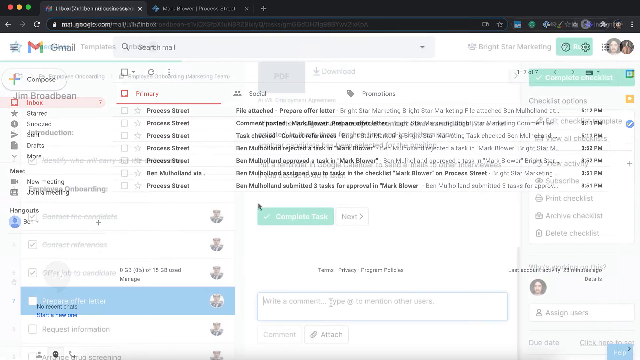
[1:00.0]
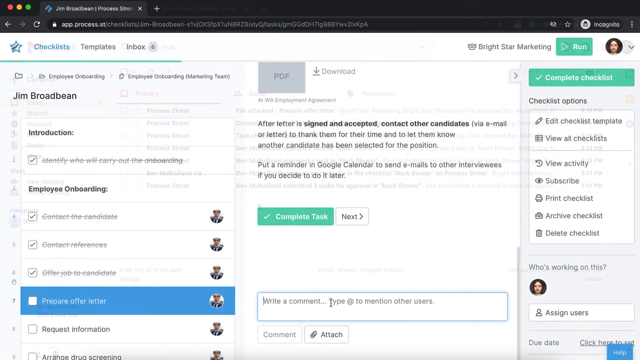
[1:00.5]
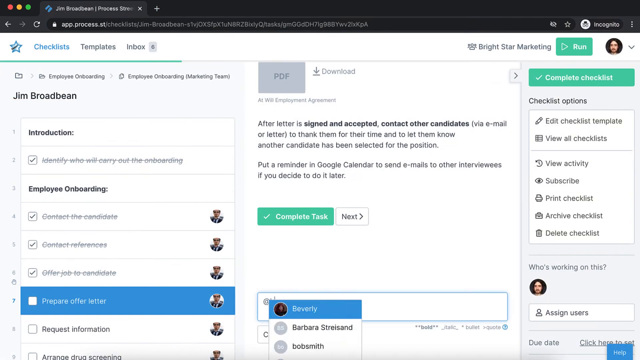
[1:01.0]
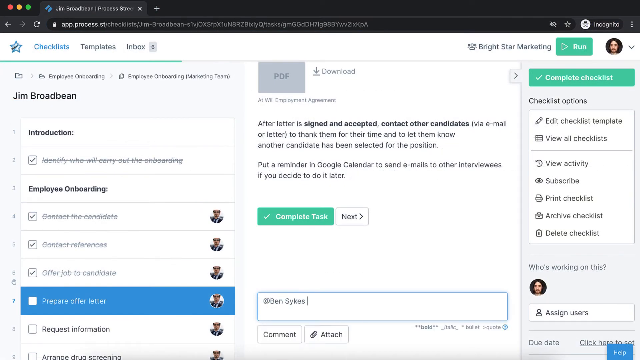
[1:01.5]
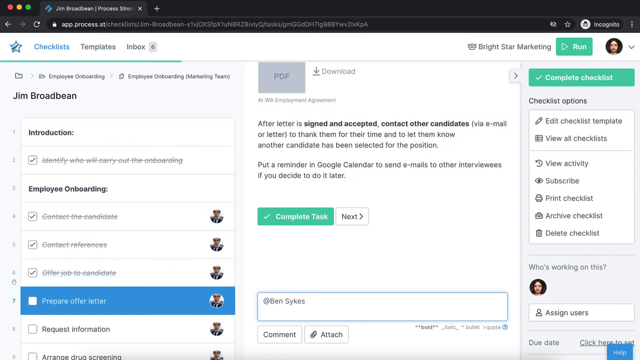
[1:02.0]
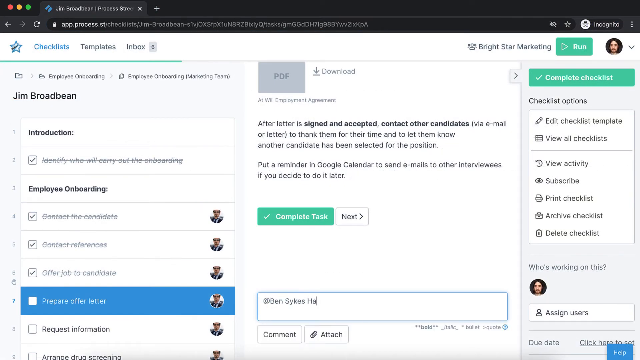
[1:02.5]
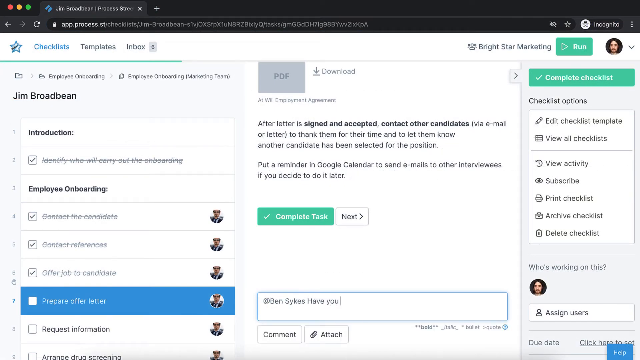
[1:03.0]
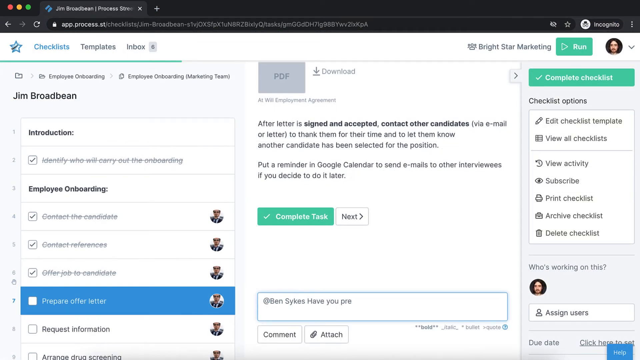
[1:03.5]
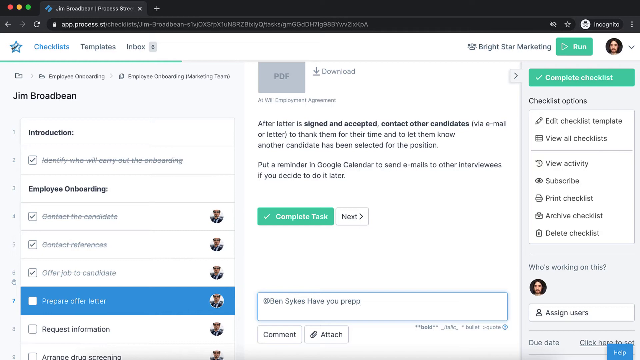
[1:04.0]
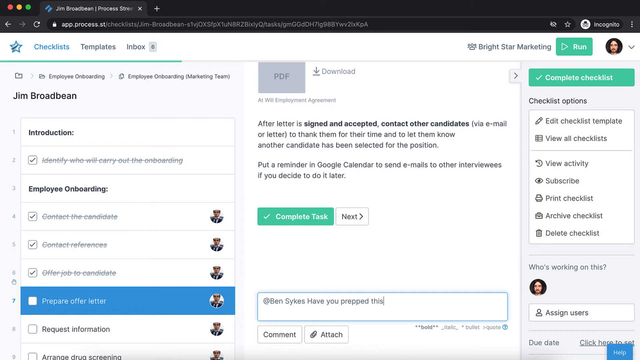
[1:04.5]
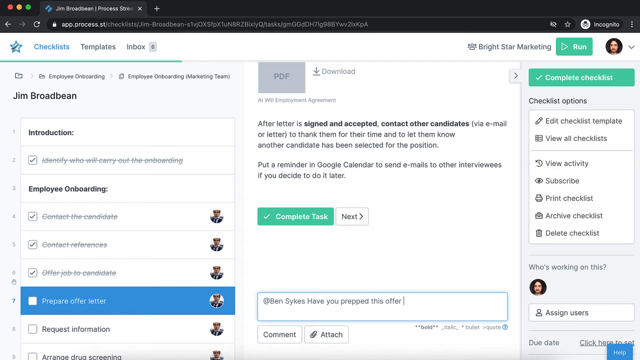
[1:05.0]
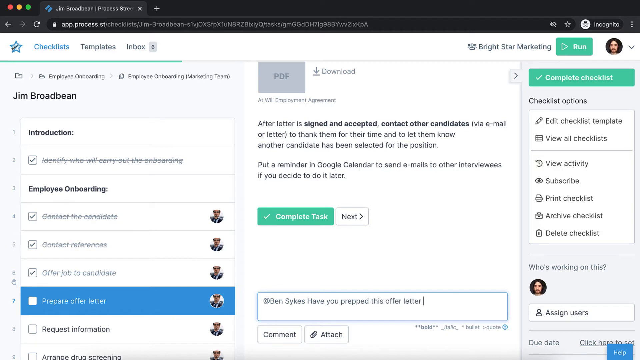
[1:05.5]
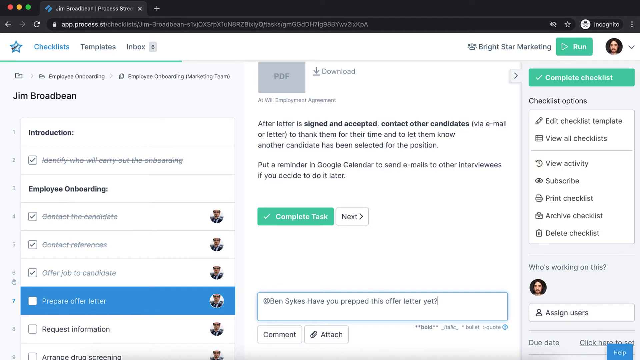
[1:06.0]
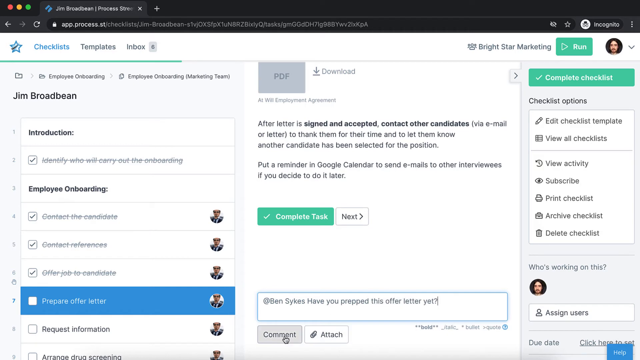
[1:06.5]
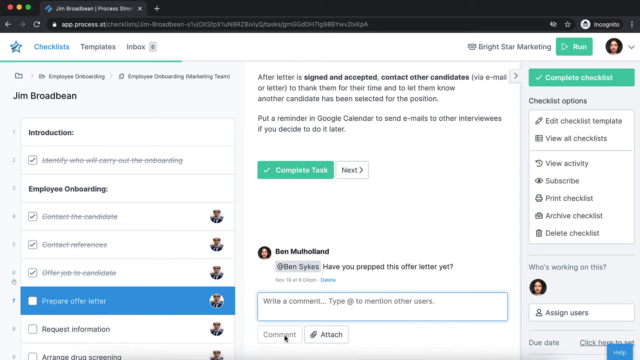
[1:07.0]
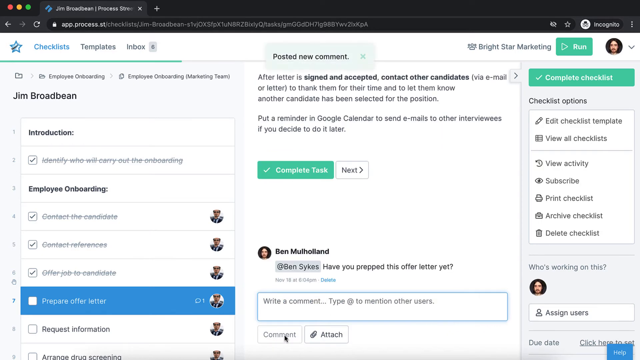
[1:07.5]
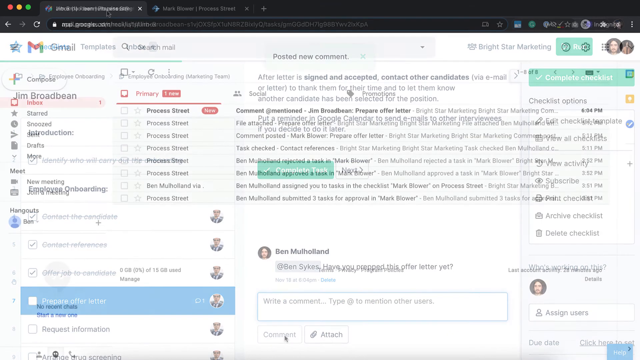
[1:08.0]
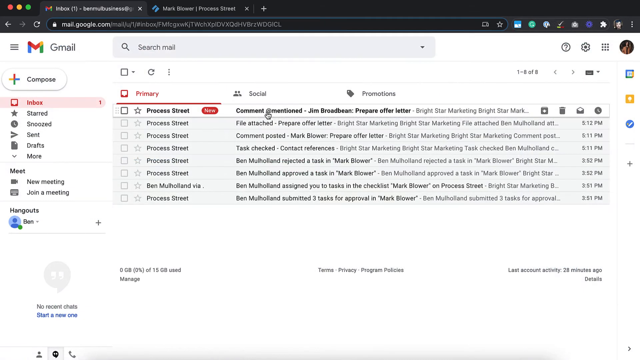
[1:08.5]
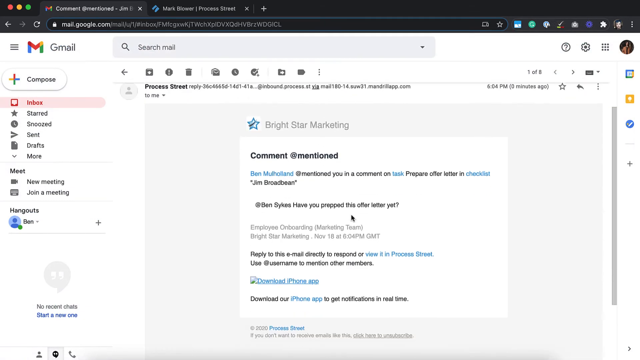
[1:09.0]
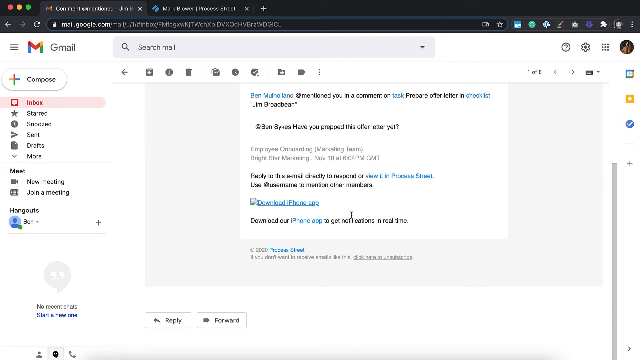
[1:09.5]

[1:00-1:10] A Gmail inbox has the primary tab selected; all of the emails are to Primary Process Street, and several of them have files attached. The video transitions to the app.process.st website, a task website, which shows the user's name as "Jim Broadbeam". This is the employee onboarding section, with checkboxes going down the left side of the box below the introduction. Checking a box crosses out that task. The first task, "identify who will carry out the onboarding", has been done, and the list continues with contact a candidate, contact references, offer a job and so on. It also says "prepare offer letter", and the person is now preparing the offer letter.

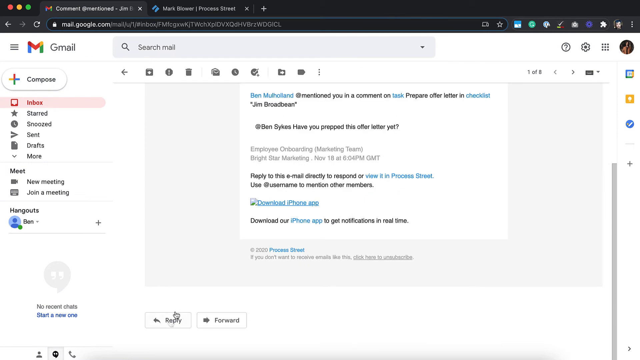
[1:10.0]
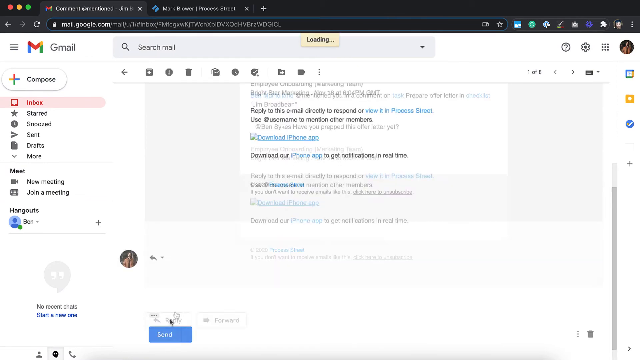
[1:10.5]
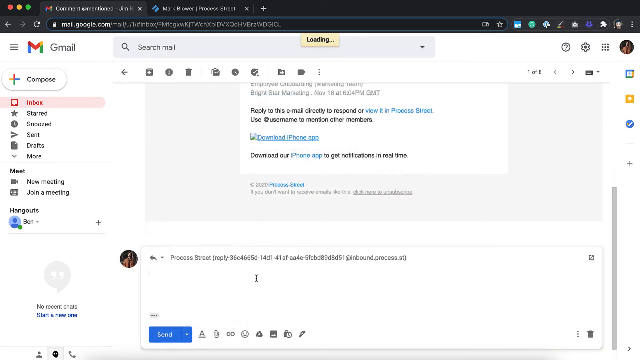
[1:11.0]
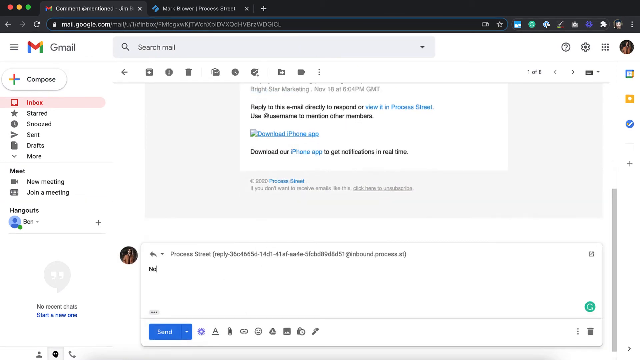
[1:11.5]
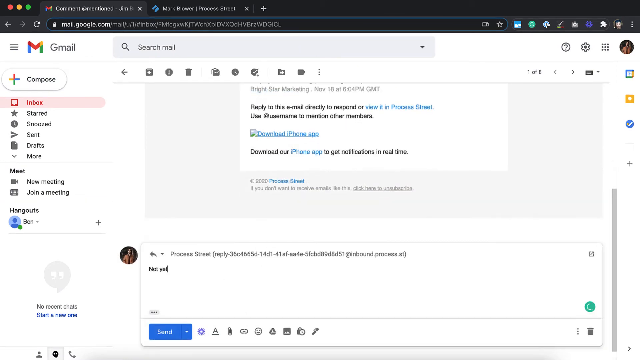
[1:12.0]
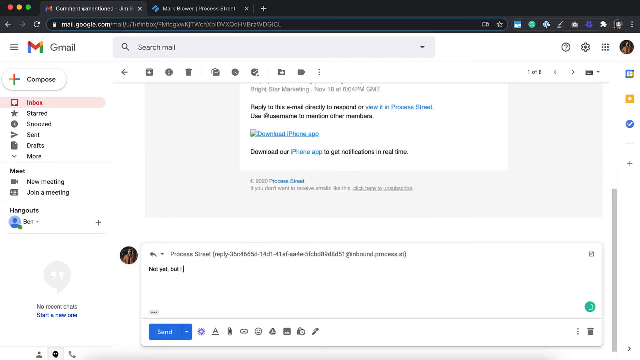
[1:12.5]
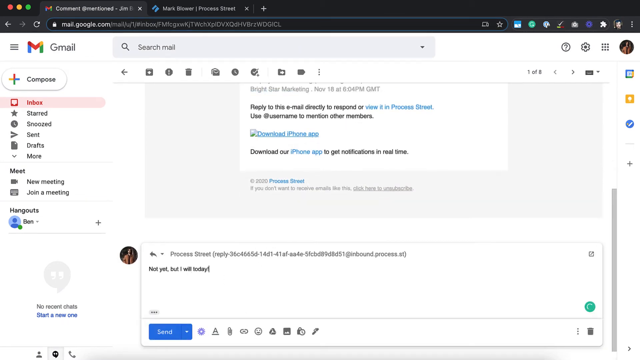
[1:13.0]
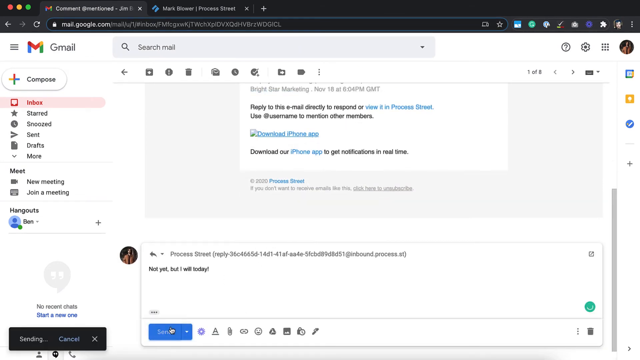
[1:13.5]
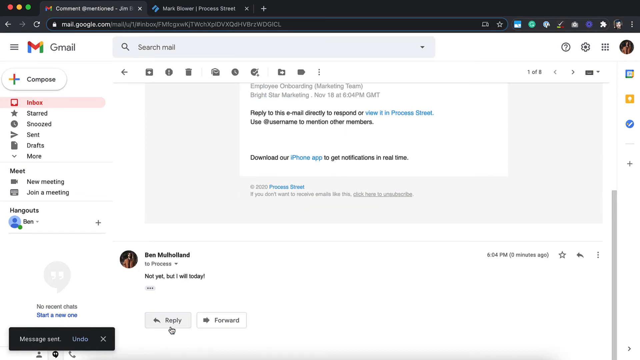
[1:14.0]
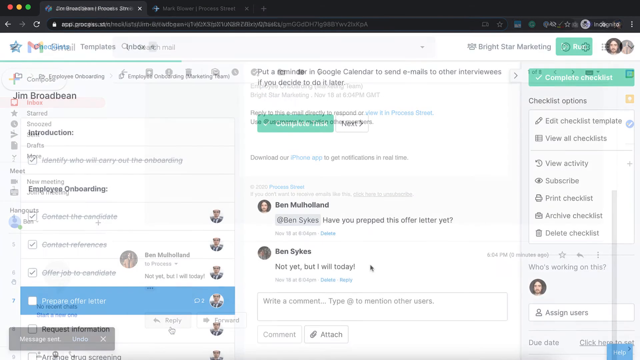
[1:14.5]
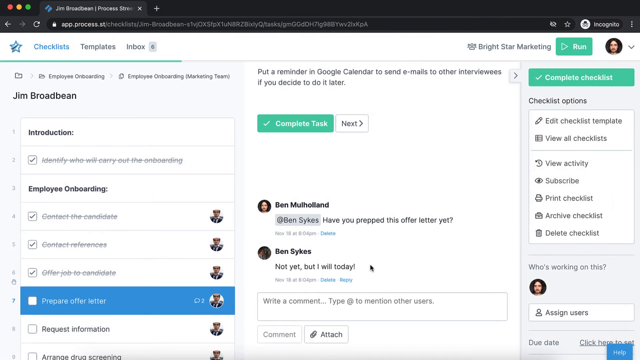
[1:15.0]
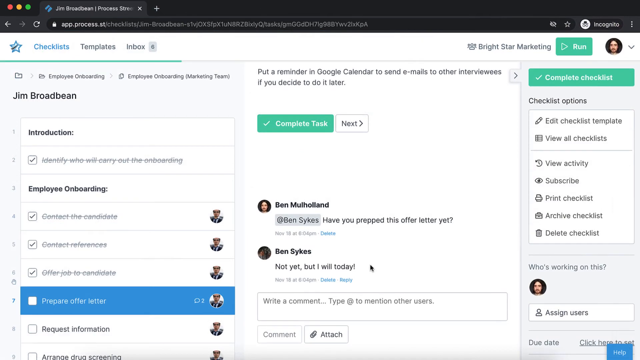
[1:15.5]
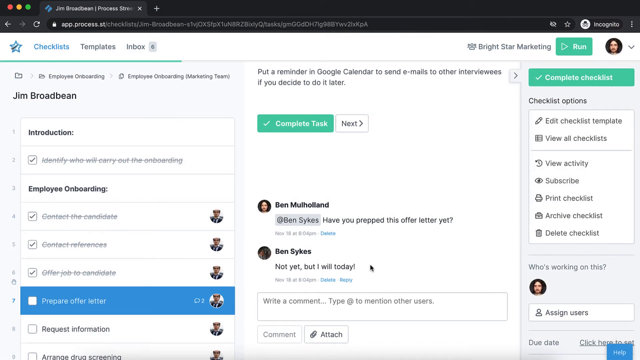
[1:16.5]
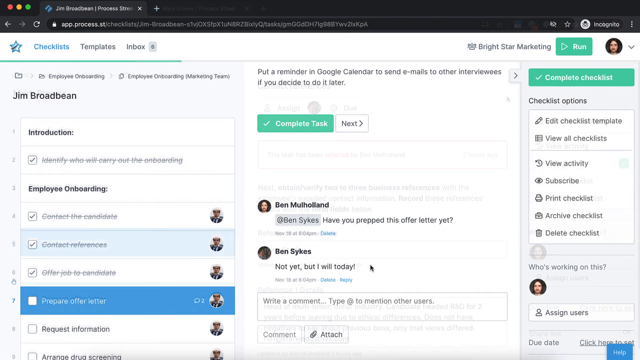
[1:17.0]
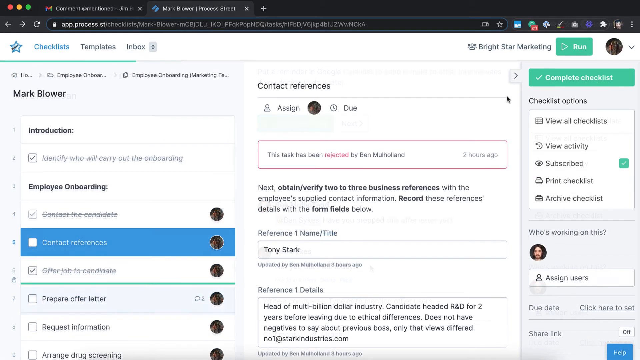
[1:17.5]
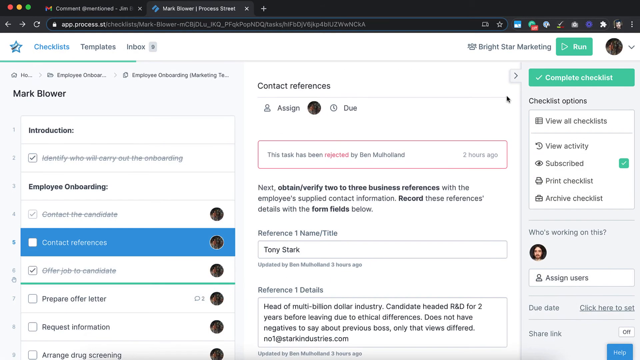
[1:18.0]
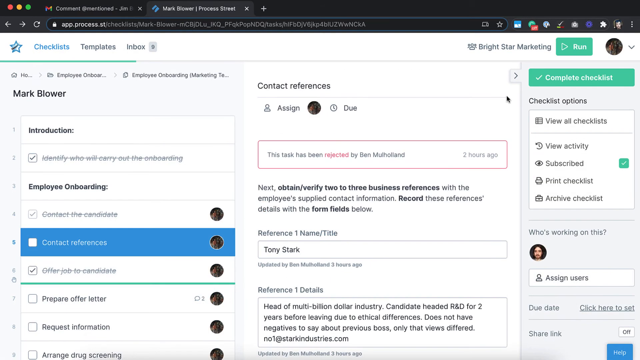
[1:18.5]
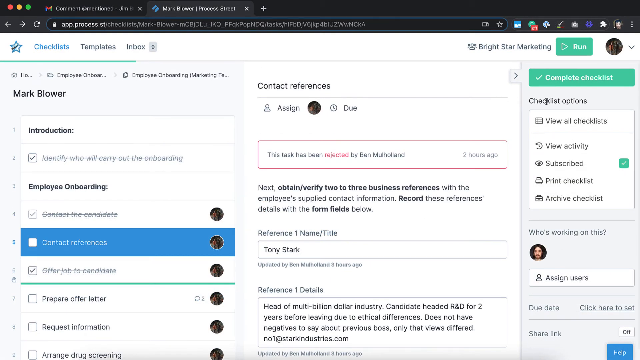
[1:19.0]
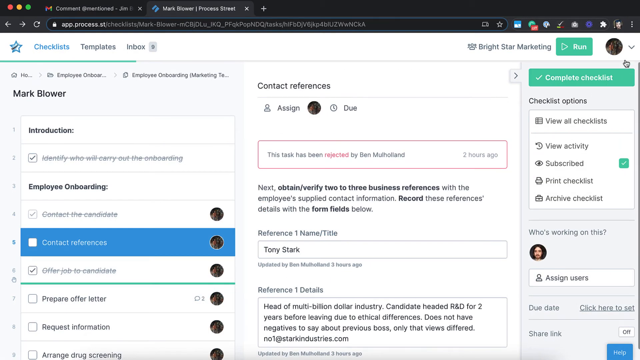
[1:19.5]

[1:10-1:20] An opened email in a Gmail inbox references a person named Ben Sykes and says "have you prepared the offer letter yet?", and the person responds "not yet, but I will today." They then go to the task website, app.process.st, apparently a site for looking at resumes and onboarding new employees. On the left is a checklist the person is working through; as each step is marked with a check, that task is crossed off the list. The current step, "prepare offer letter", is highlighted in blue, and to the right the person is preparing the offer letter, with the email sent between the two people shown.